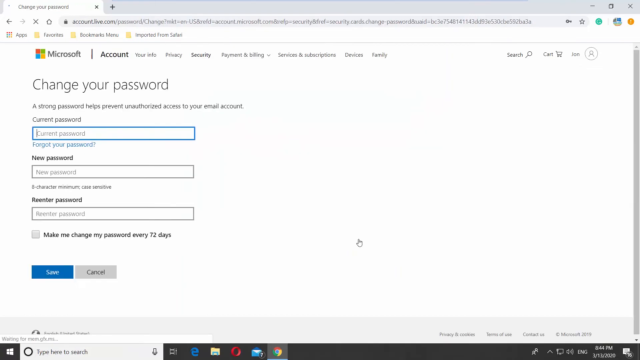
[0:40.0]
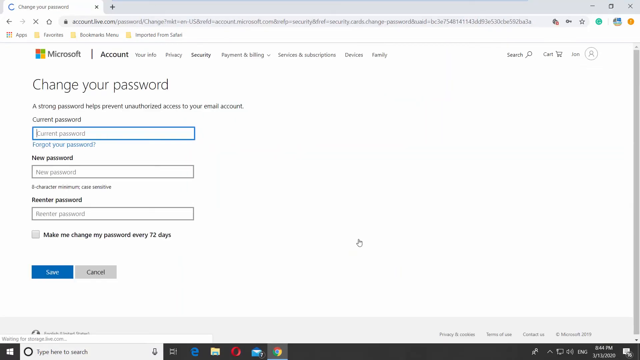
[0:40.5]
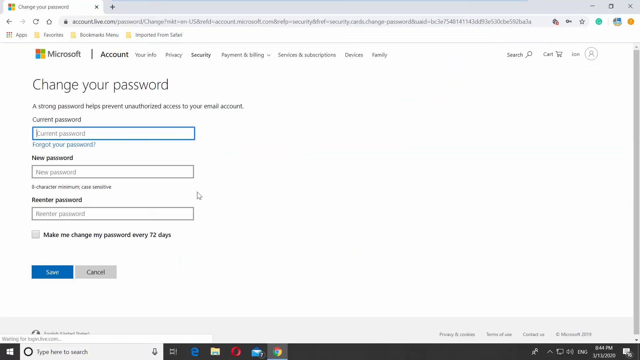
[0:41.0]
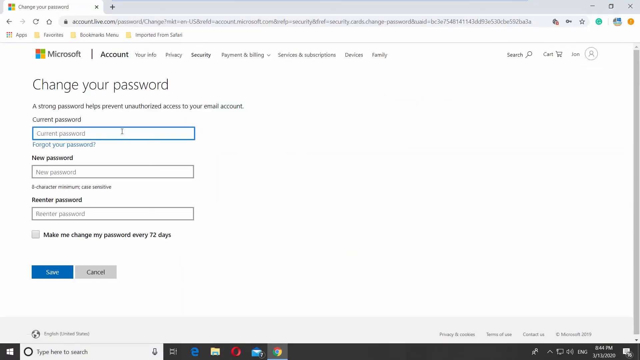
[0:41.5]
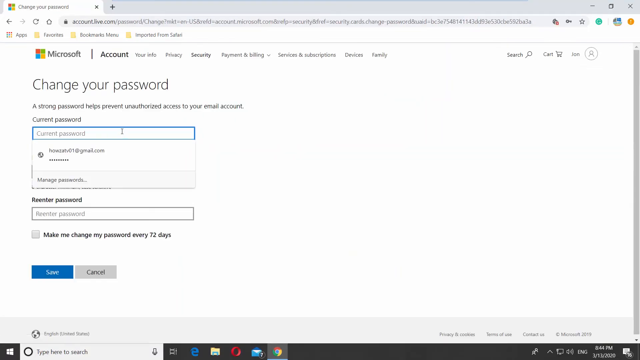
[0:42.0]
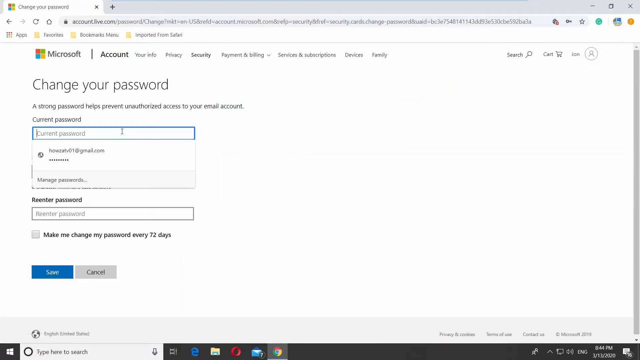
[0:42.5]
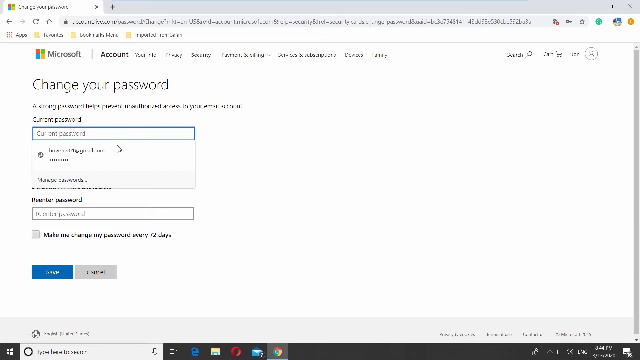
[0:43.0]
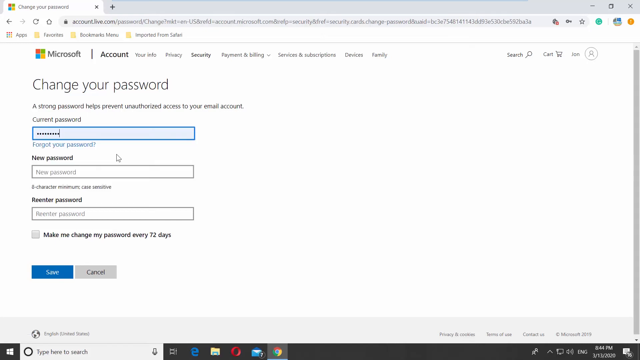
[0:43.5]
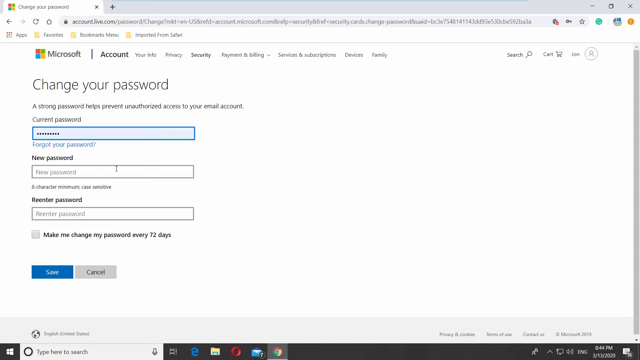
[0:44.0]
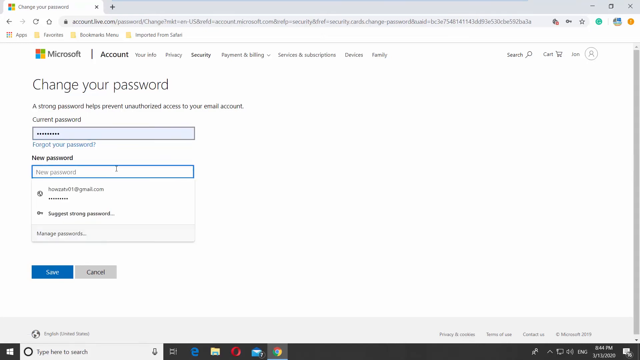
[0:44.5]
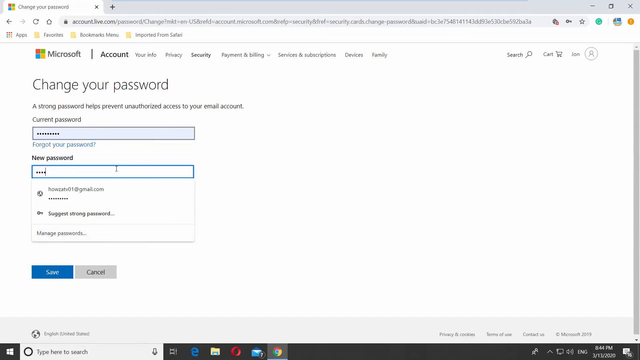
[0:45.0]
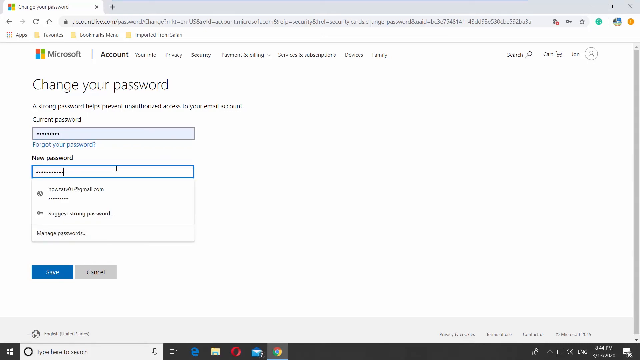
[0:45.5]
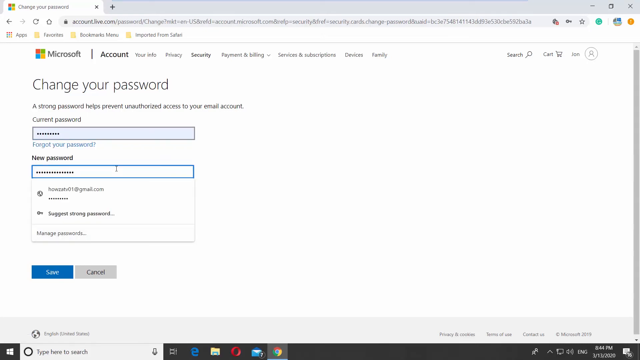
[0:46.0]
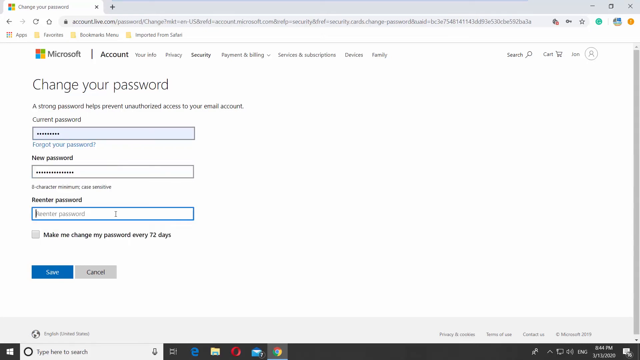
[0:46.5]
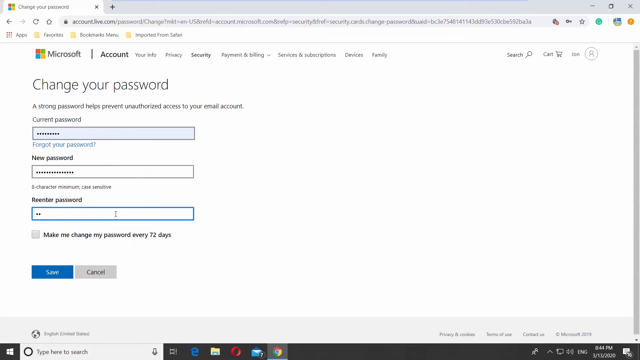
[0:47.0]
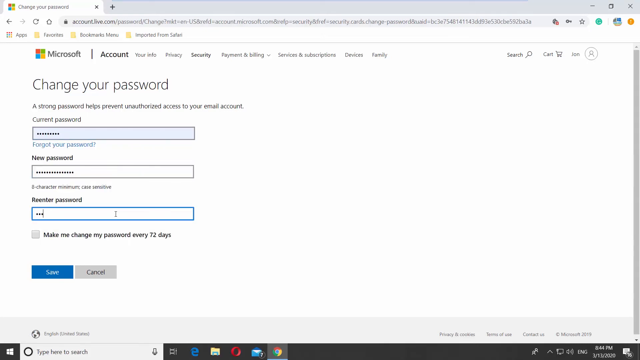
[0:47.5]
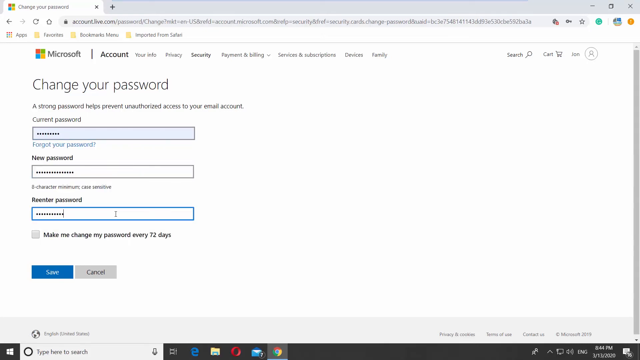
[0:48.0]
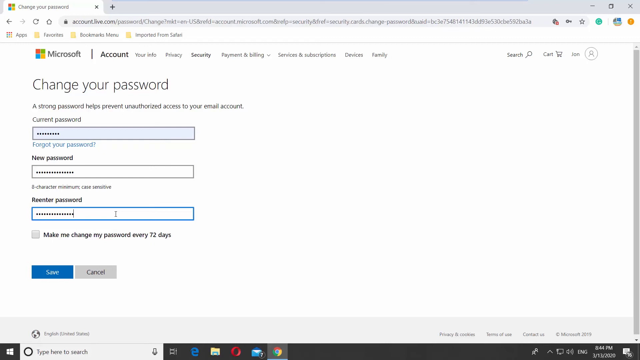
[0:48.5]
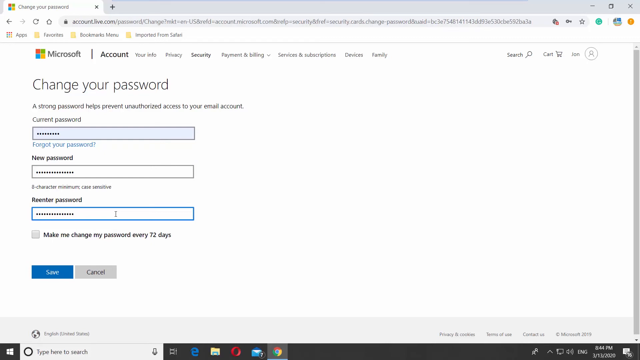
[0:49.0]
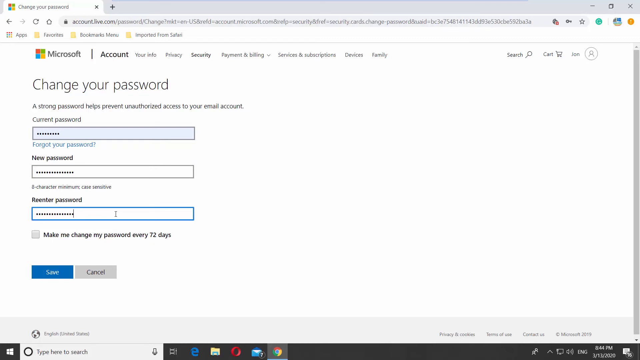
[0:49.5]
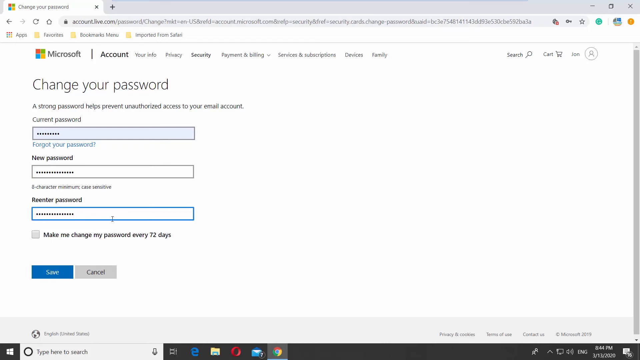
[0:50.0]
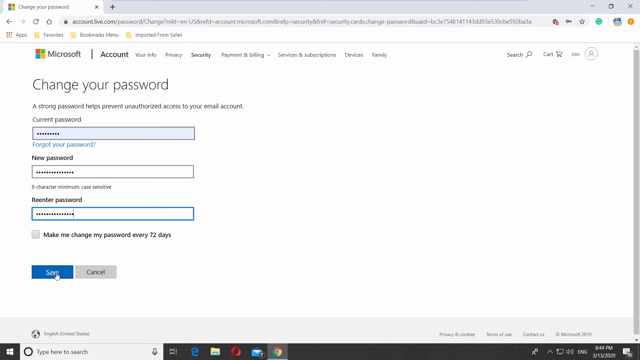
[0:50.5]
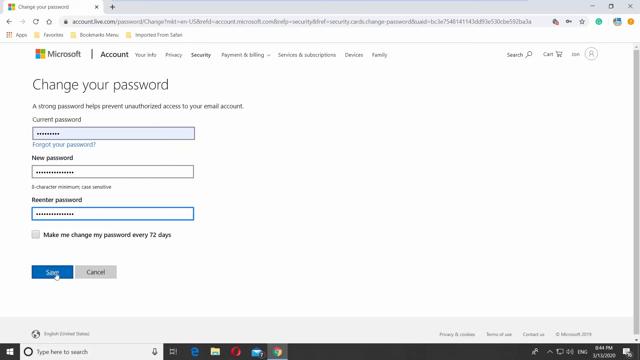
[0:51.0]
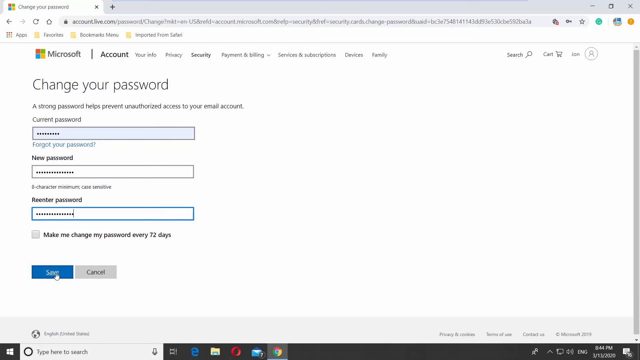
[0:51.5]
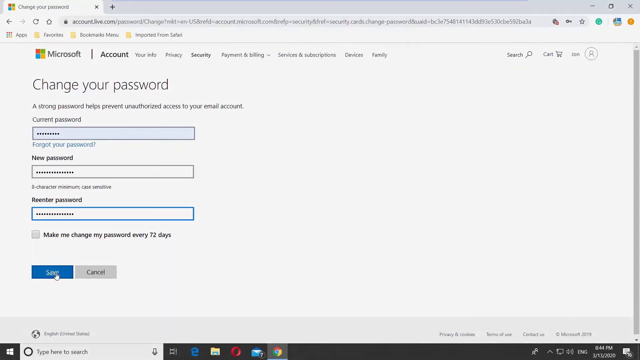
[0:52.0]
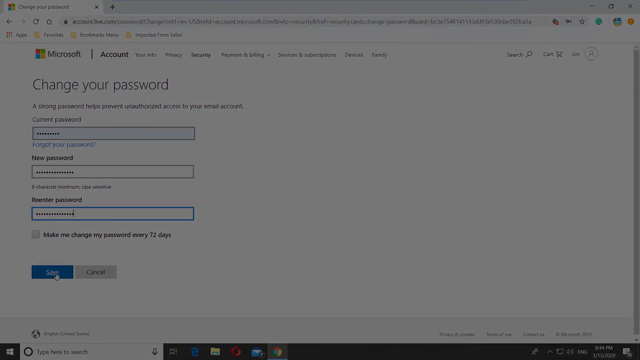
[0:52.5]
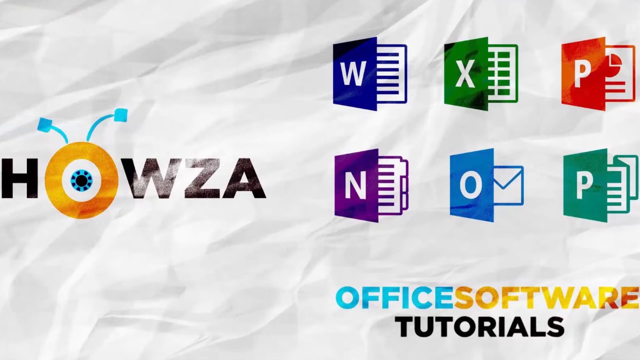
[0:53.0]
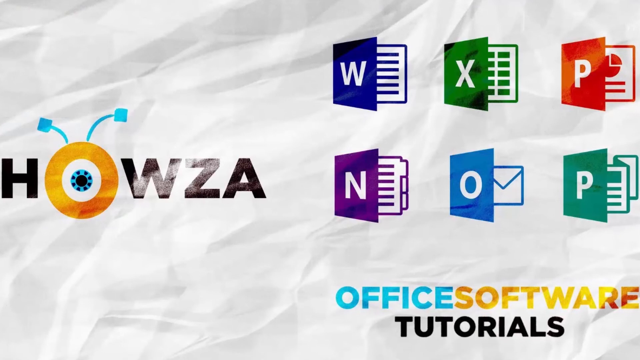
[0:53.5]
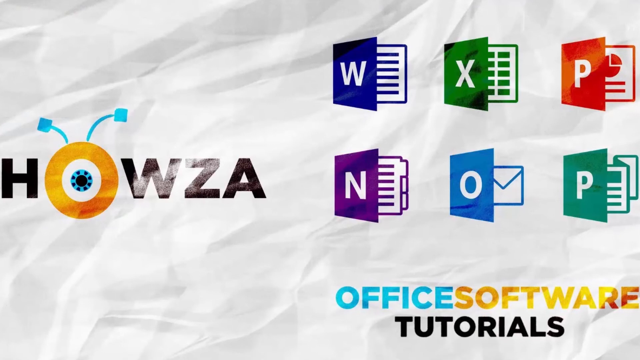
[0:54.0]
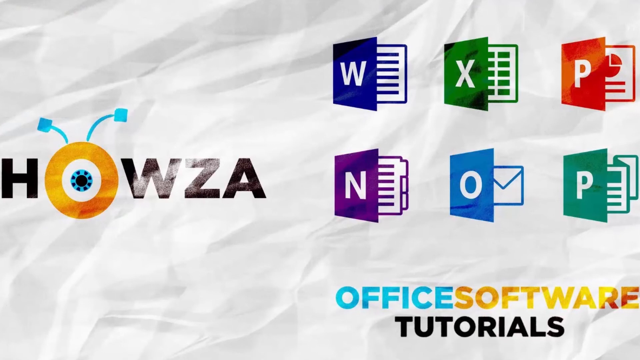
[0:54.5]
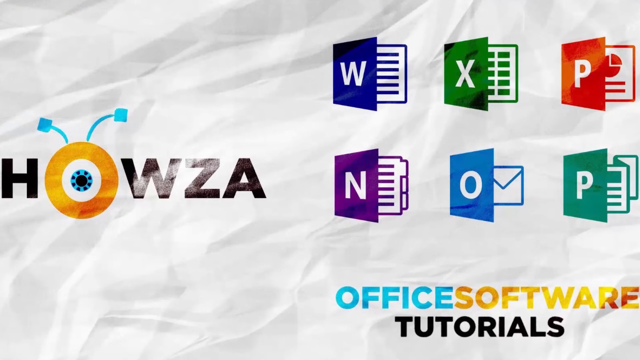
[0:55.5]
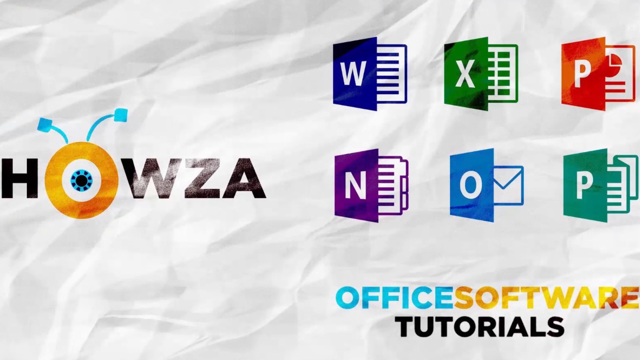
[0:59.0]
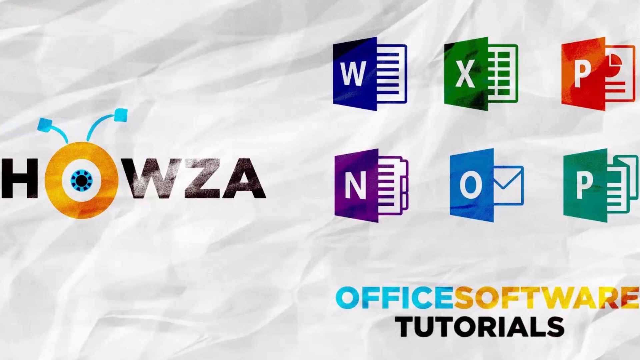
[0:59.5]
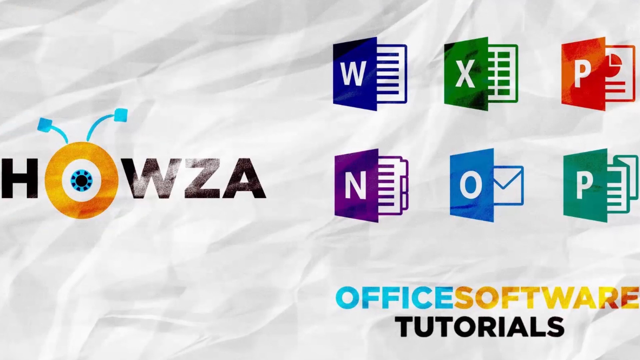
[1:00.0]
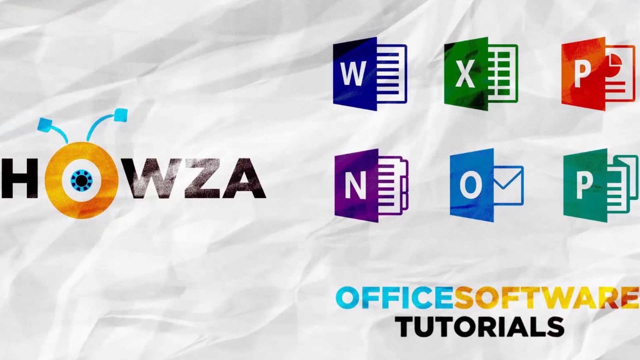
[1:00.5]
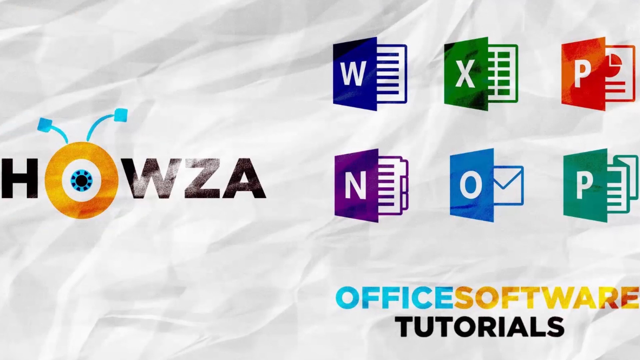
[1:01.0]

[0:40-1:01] On the Change Your Password page, the cursor clicks and a dropdown appears from which the current password can be selected. At the new password field the person types in several bits of input, and does the same for the re-enter password field. They click save, and the video fades out to a black screen. The computer then returns to the main page, showing the name "Hausa" with the little monster eye icon inside the O, the various Office software programs in the background, "Office" written in blue, "software" in a yellow-to-orange fade, and "tutorials" written in black below.